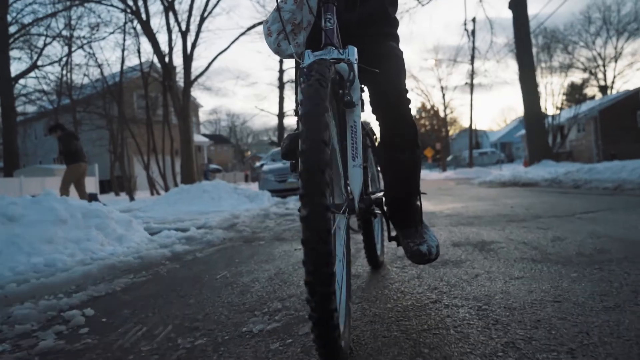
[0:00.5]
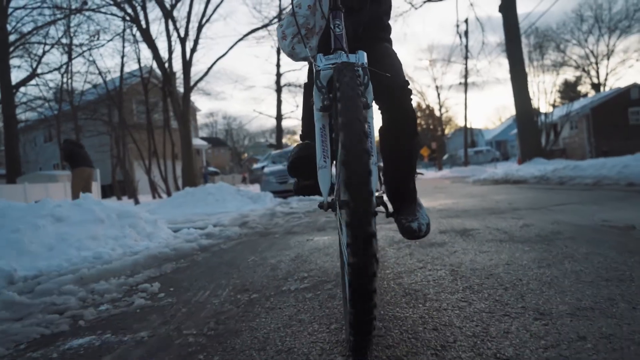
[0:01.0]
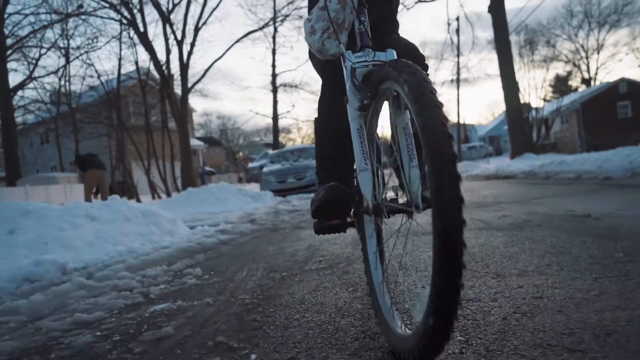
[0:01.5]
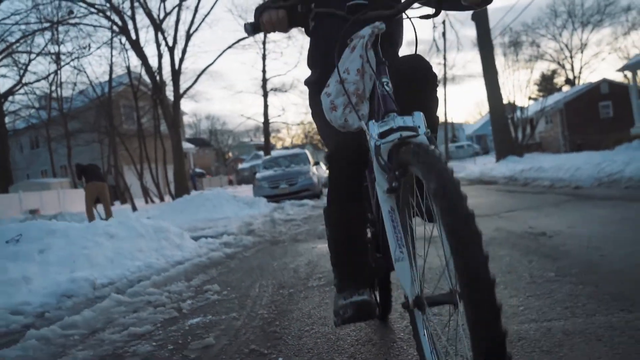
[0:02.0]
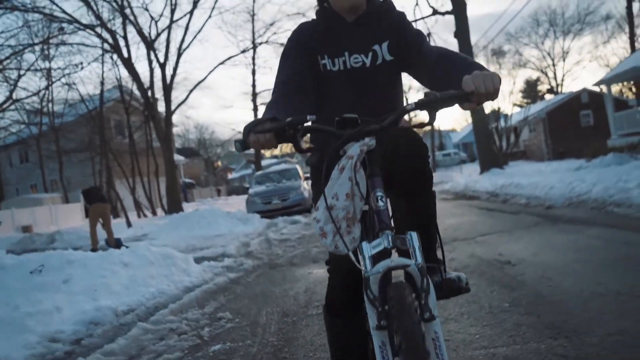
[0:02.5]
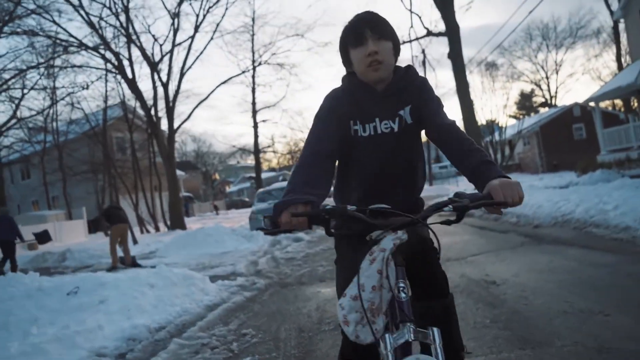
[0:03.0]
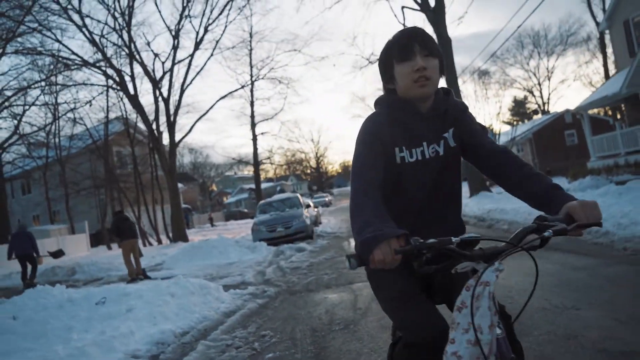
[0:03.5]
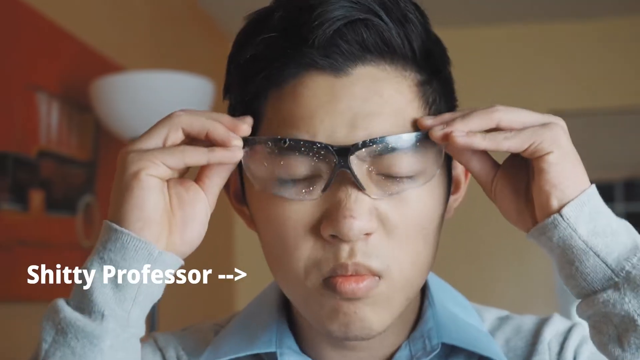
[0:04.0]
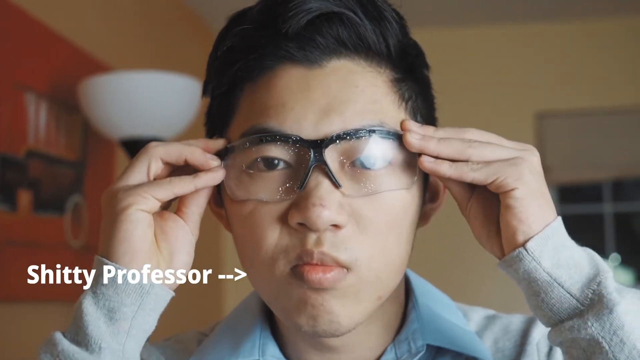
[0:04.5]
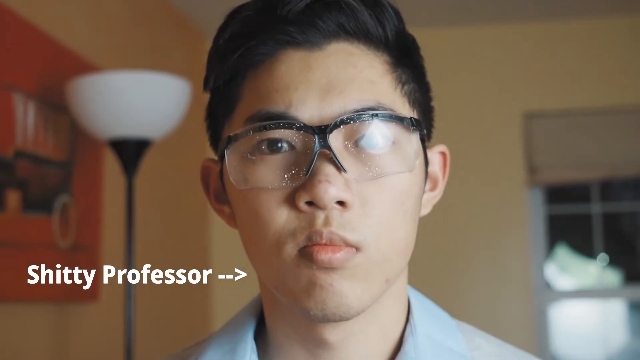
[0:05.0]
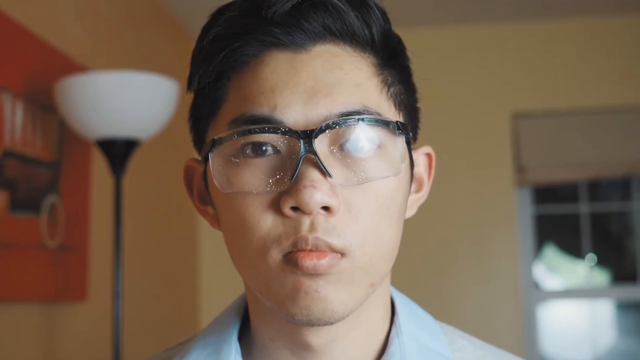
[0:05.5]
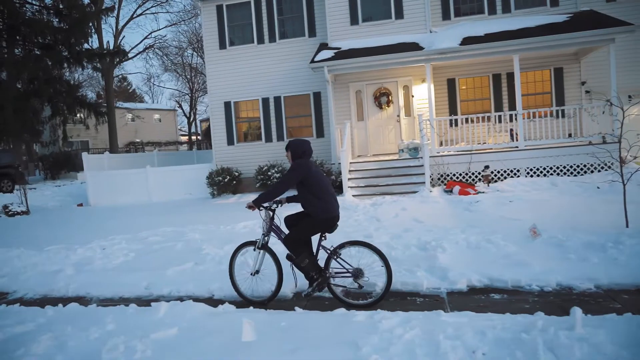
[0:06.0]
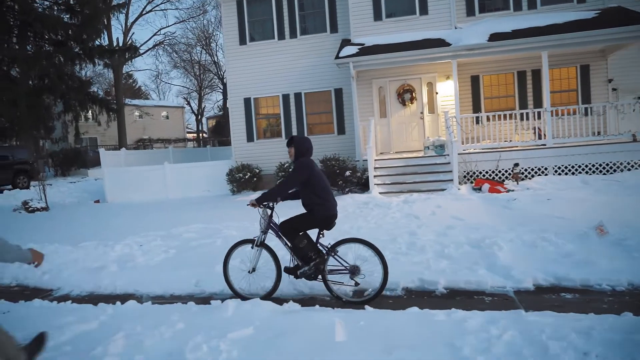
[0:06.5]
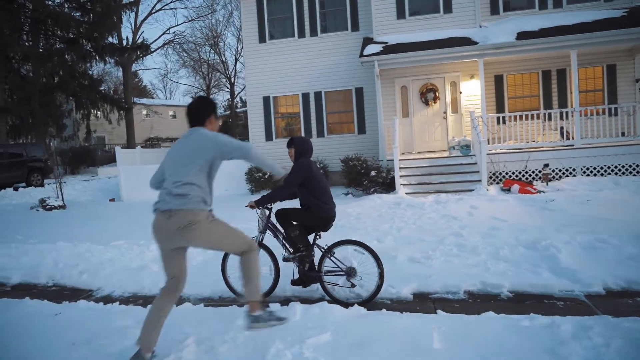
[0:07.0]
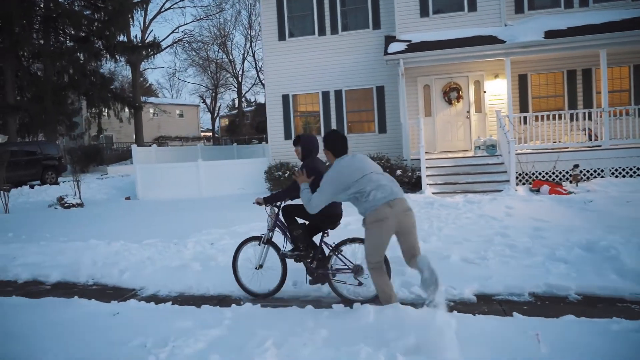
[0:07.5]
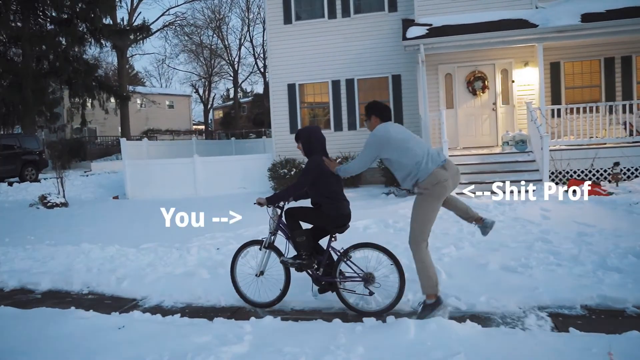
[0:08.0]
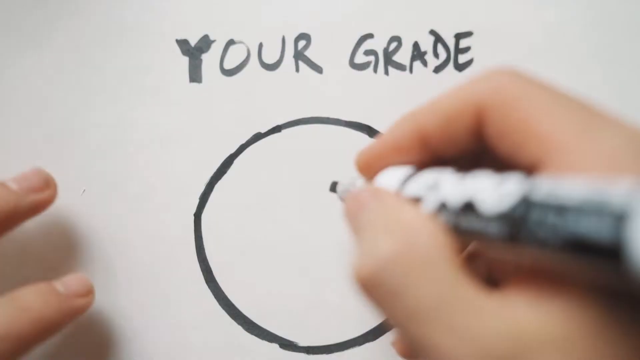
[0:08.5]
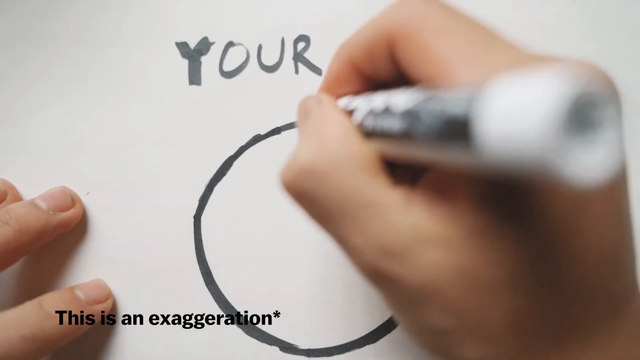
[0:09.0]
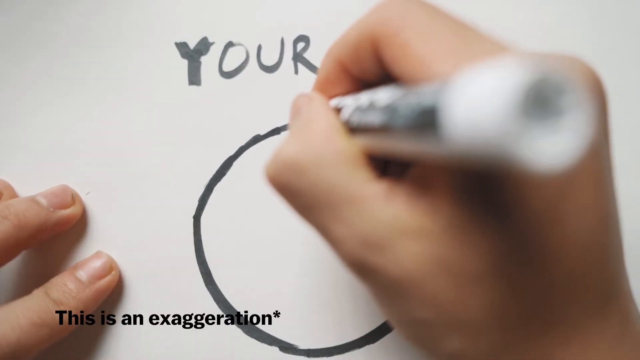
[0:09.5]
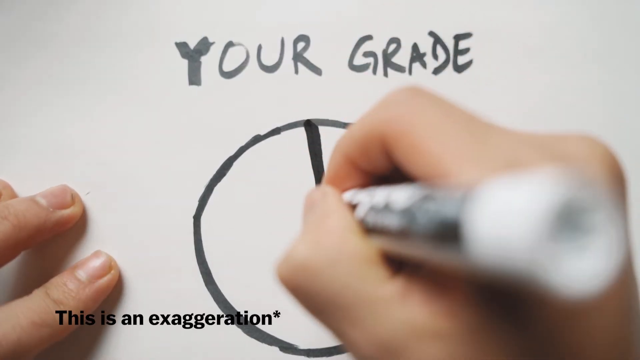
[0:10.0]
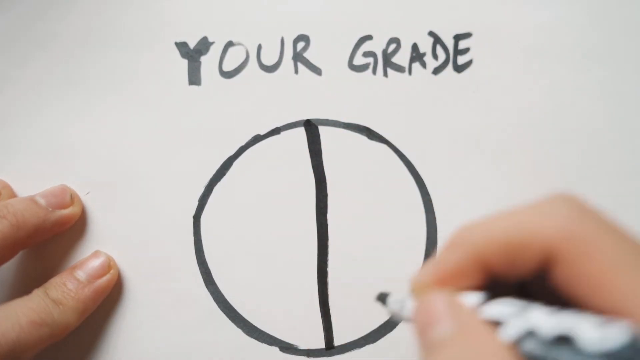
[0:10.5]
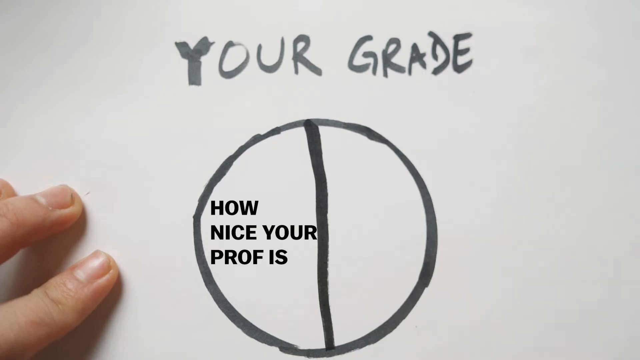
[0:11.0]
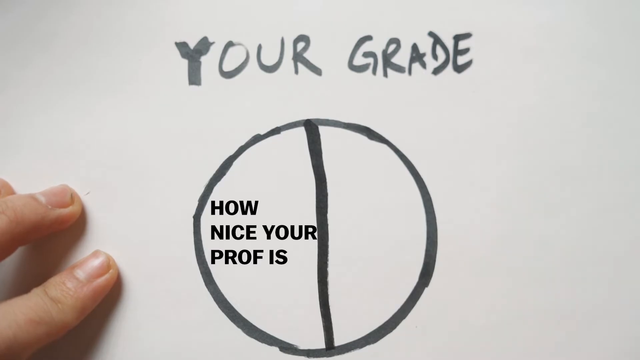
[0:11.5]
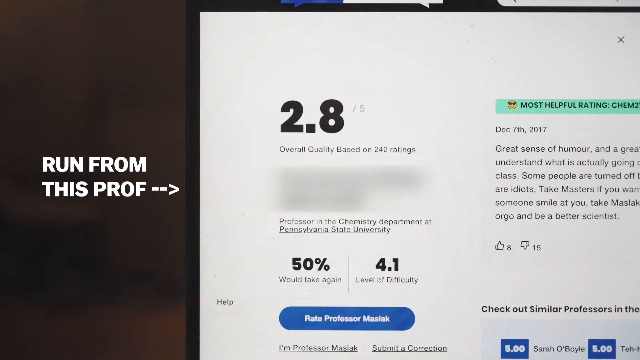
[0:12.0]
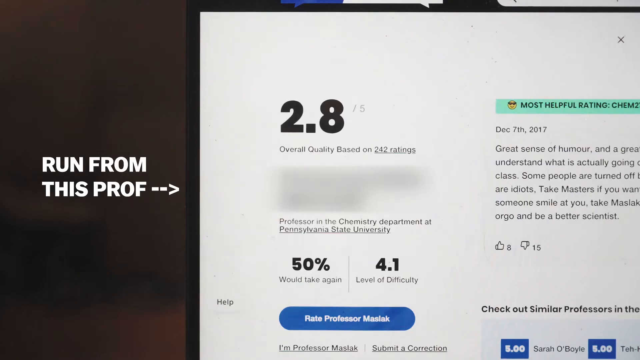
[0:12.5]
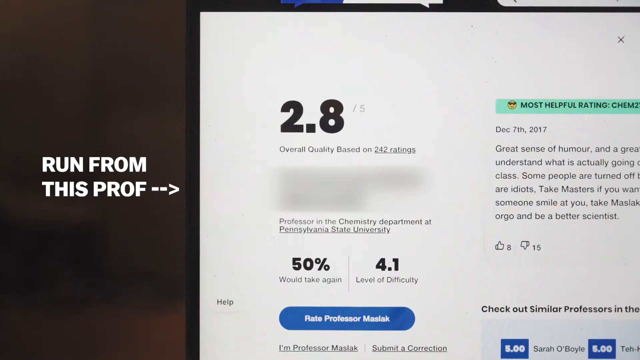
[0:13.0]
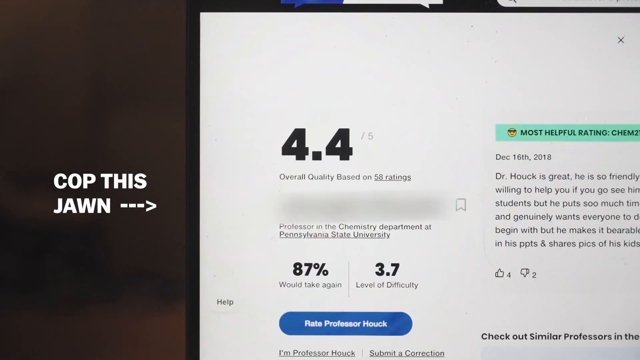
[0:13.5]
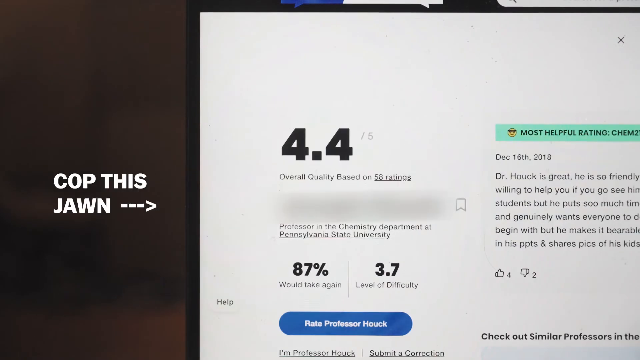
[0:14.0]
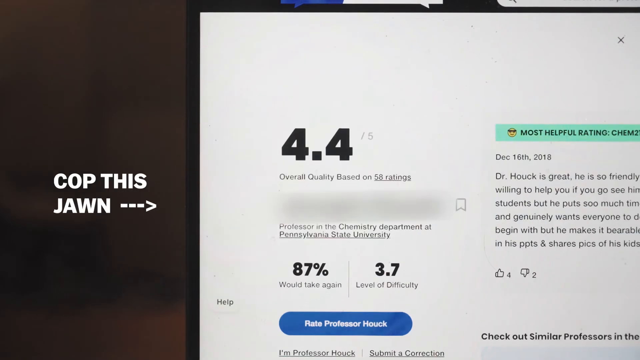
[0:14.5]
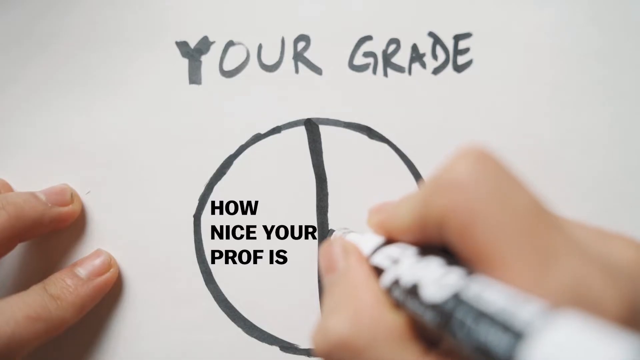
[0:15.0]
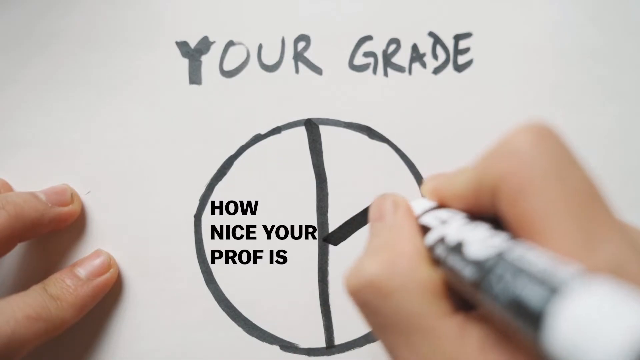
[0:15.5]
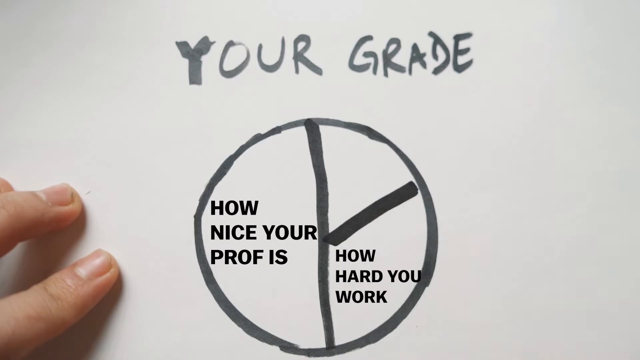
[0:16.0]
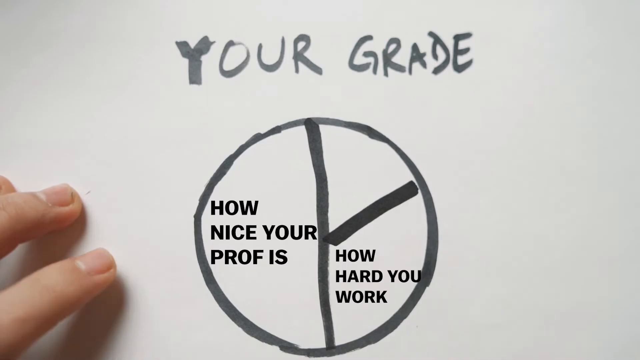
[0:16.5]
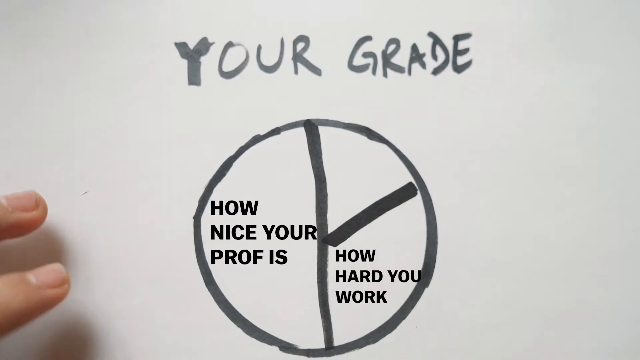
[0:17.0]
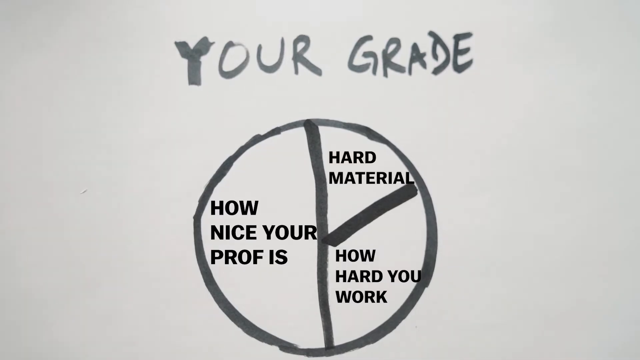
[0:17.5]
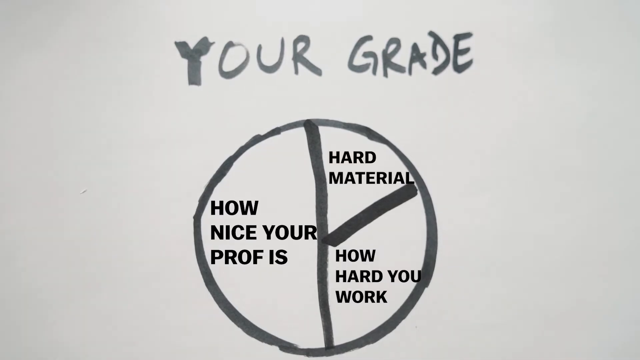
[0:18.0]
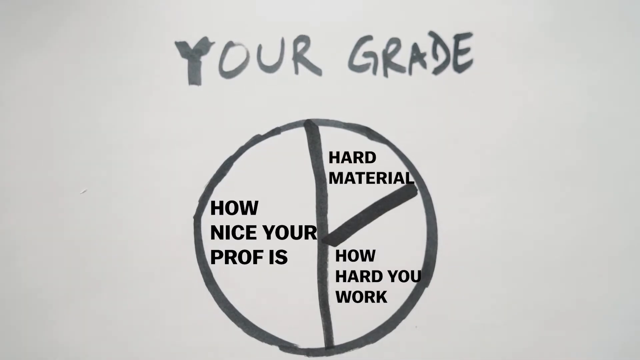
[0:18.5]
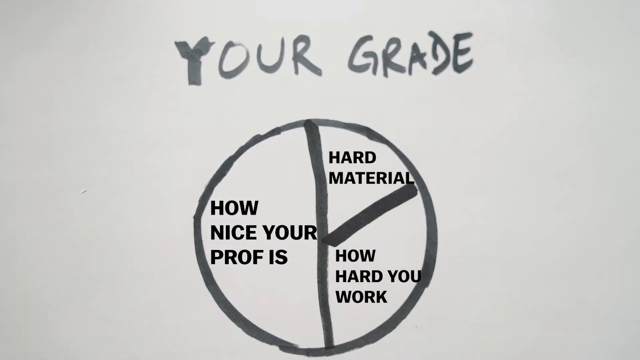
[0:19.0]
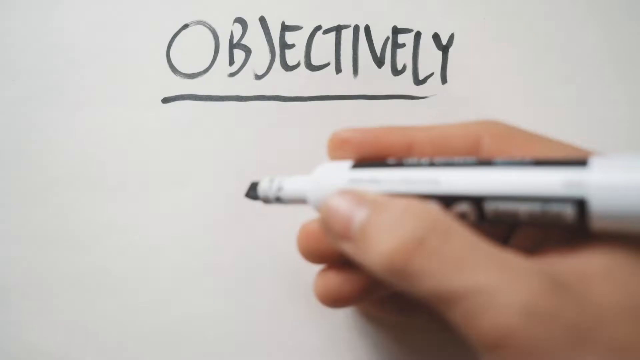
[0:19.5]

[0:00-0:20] A kid in some kind of sweater rides a bicycle down the street in the middle of winter while some people blow the snow. The video cuts to another kid, or maybe a teenager, labeled by a sign as "shitty professor", who puts on a pair of protective glasses. The kid rides his bicycle down the street again, and the other kid or teen, the "shitty professor", is about to push him; the kid on the bicycle is labeled with the text "you". The video then shows many ratings of things that are not clear, followed by a kind of pie chart dividing up what affects a person's grade.